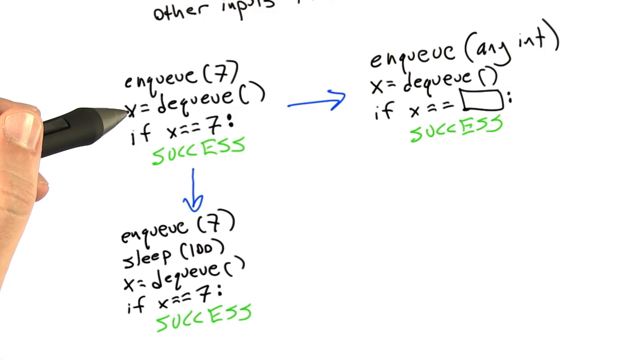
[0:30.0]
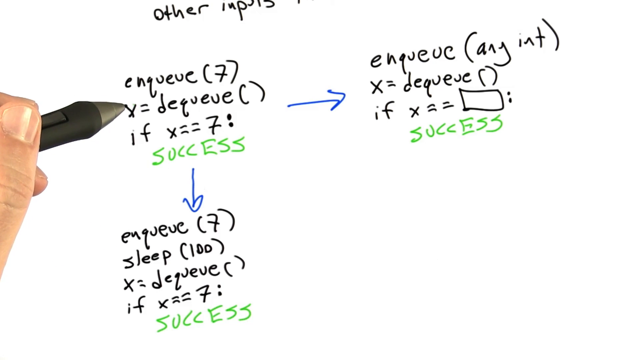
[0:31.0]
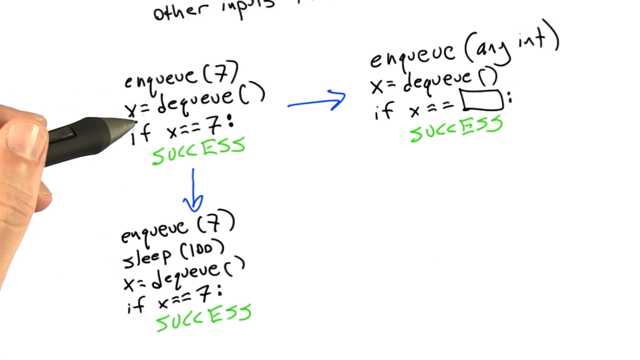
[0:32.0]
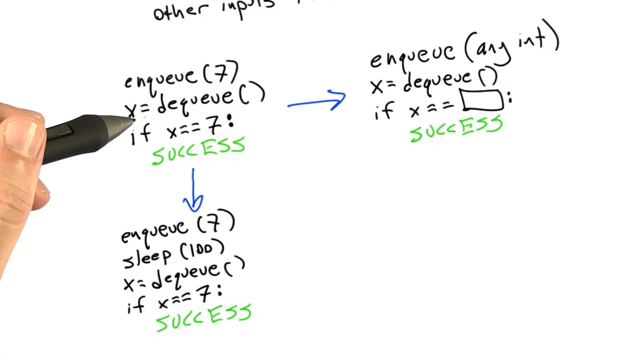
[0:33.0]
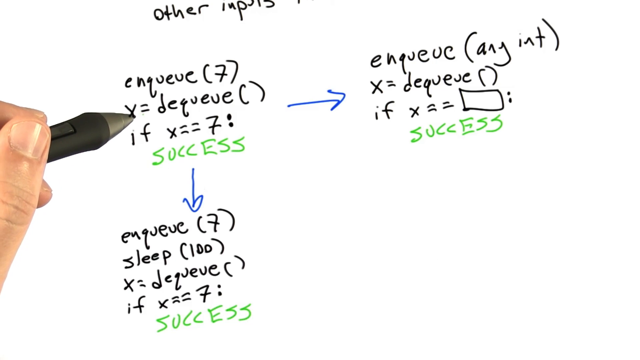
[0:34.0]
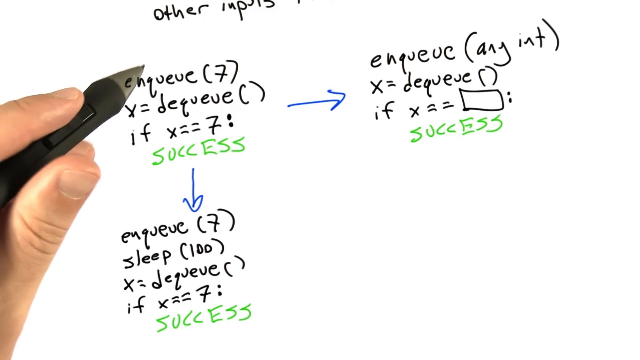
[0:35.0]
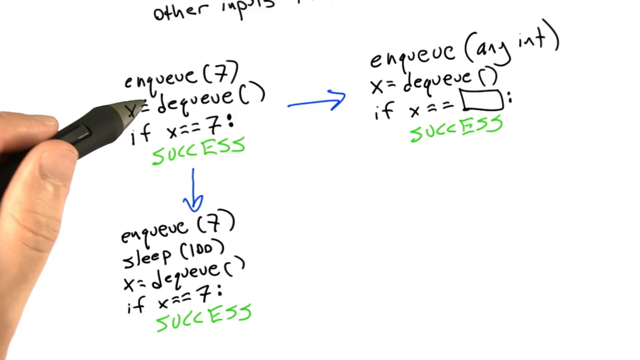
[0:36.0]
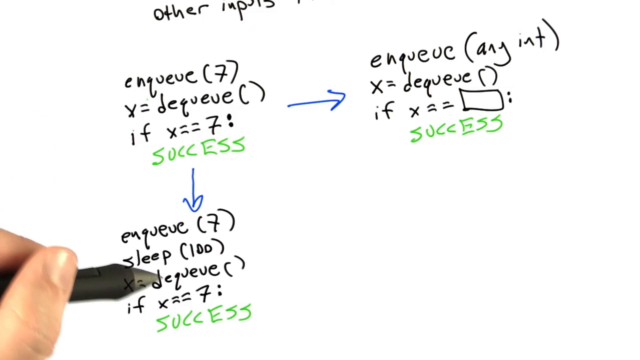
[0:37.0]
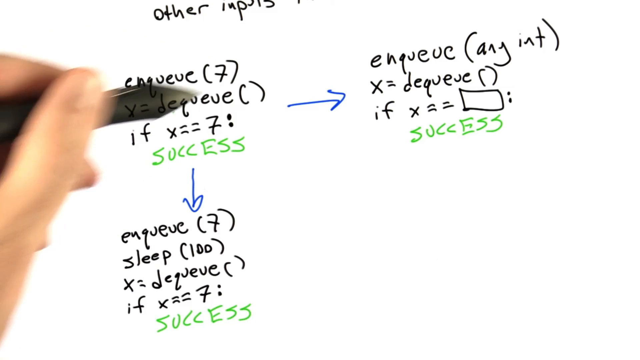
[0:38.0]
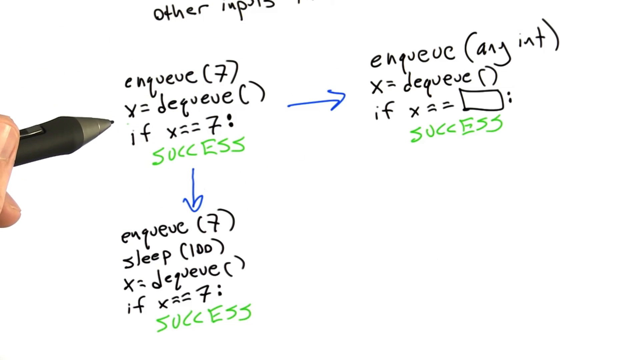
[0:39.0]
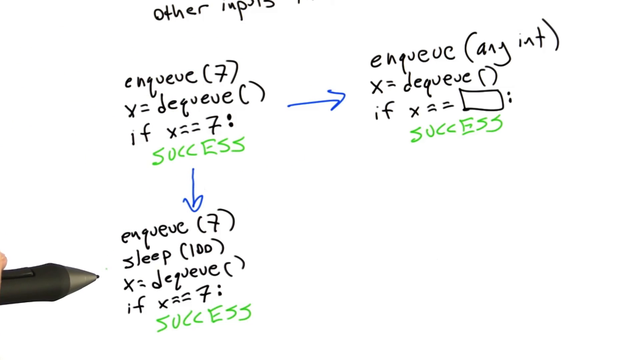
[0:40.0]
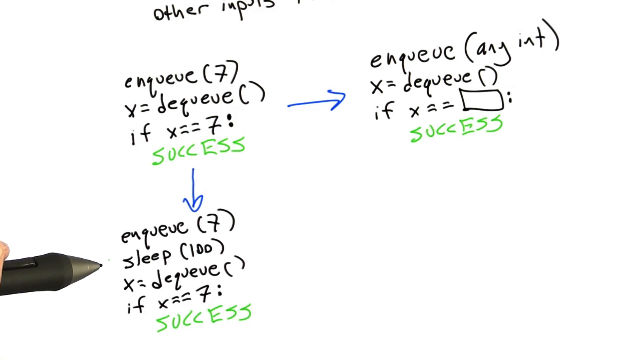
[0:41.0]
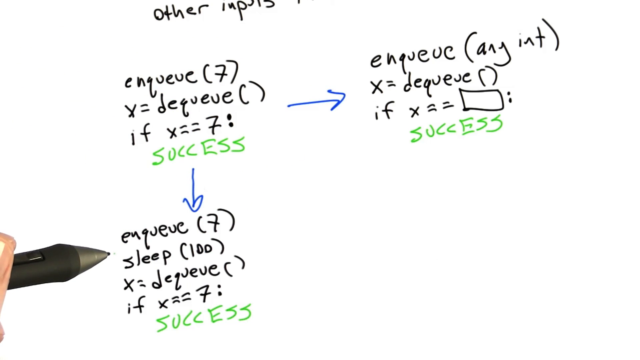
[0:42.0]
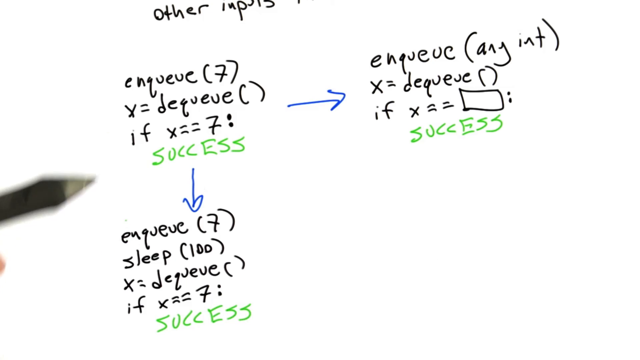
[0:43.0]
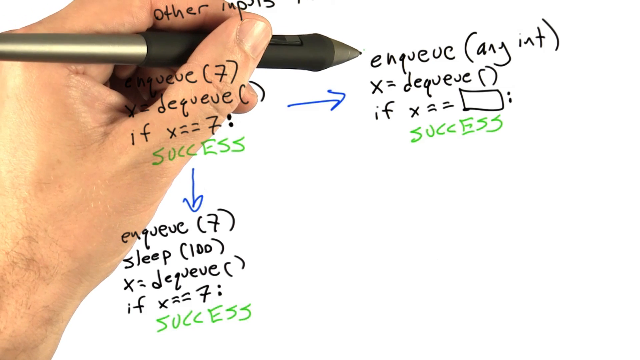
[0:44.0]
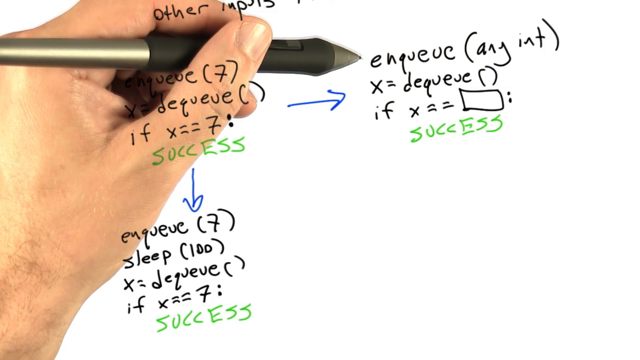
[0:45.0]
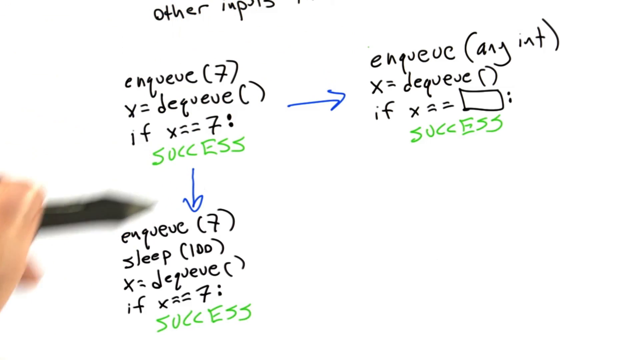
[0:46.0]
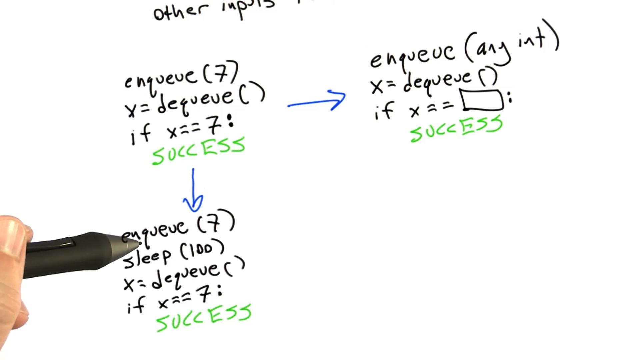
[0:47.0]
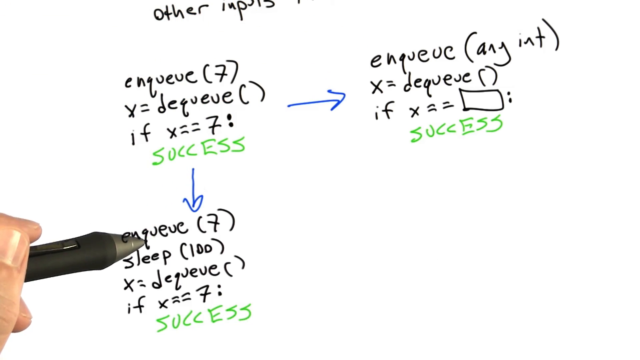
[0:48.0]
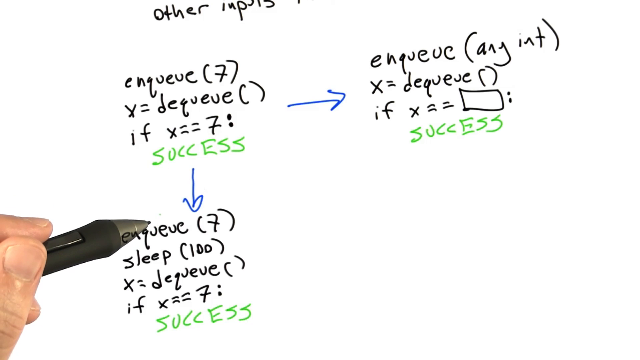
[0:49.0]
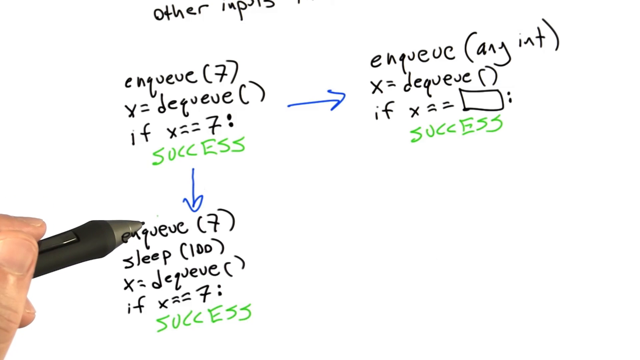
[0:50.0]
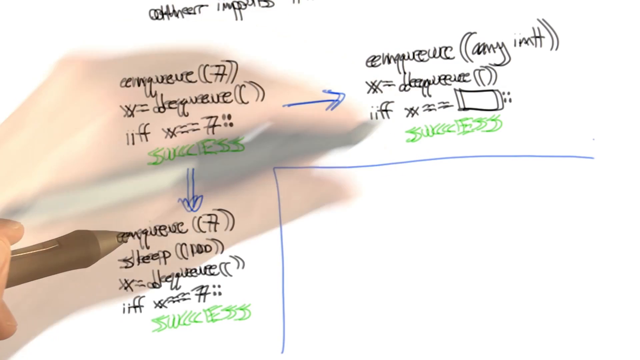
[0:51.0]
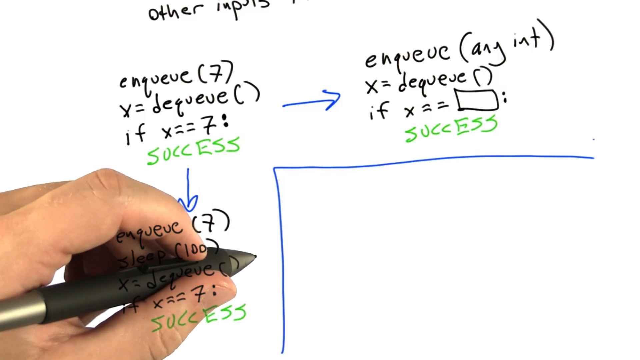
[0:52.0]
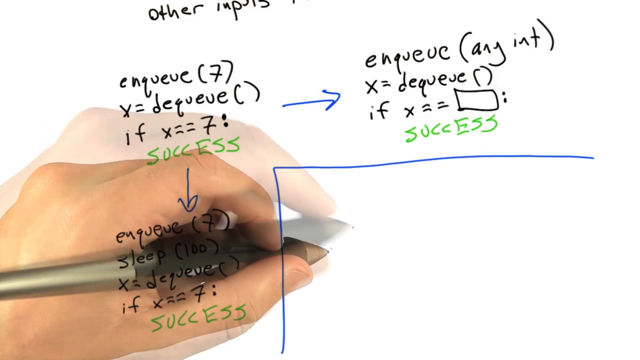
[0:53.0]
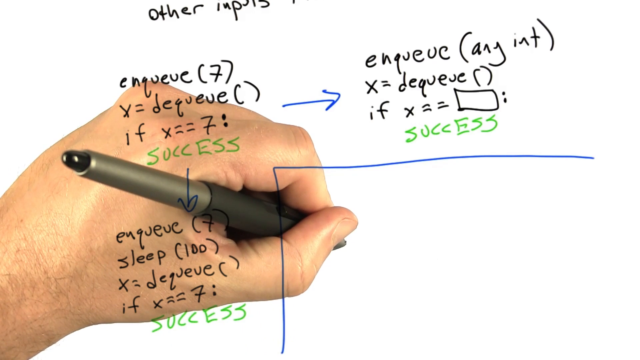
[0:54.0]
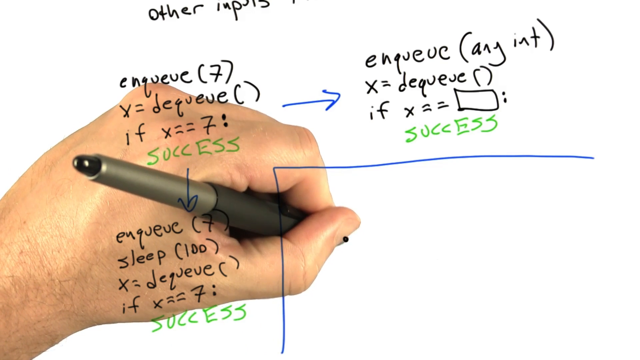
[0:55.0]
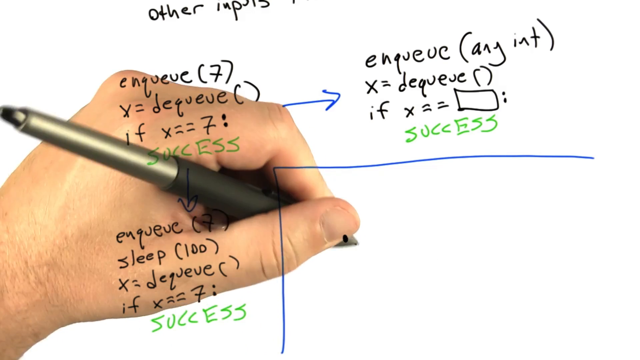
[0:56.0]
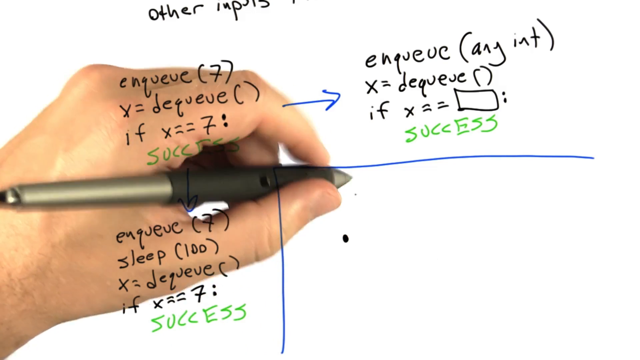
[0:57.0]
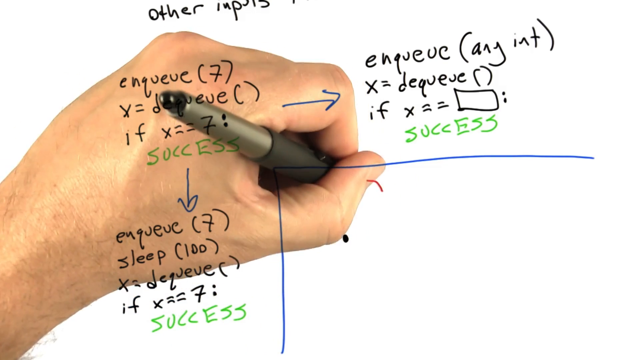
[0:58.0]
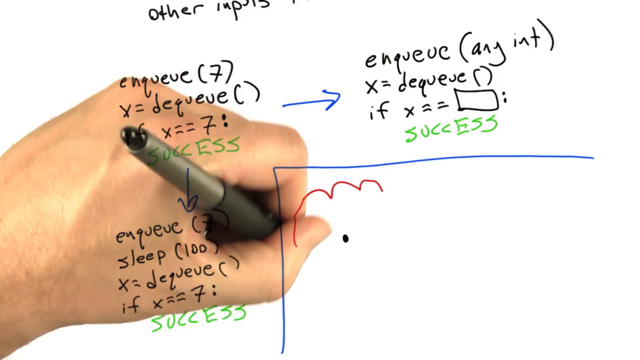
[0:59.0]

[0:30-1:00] Several fingers are now visible holding the pen as the person points to the first equation. The hand moves down to the last equation, back up to the first, and across to the third equation, and at this moment the hand can be seen. The person moves back to the first equation and then down to the last one. The hand disappears from the frame again, leaving only the pen visible. The hand moves back up and across to the second equation, quickly returns to the bottom equation, then moves up to the second equation and, below it, draws half a box in the right-hand corner. The person begins writing inside this box, drawing a black dot and then a pink cloud around it, all without changing pens.